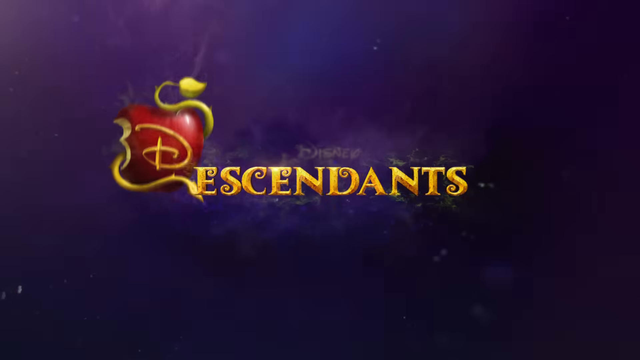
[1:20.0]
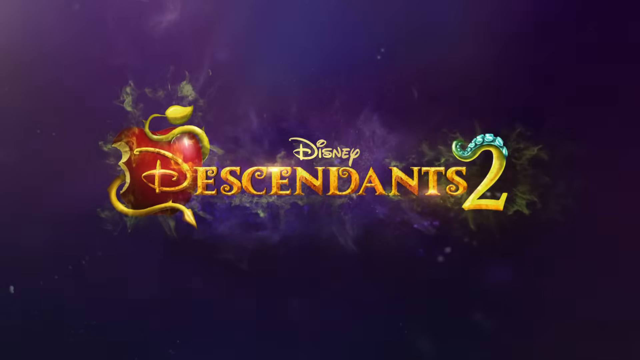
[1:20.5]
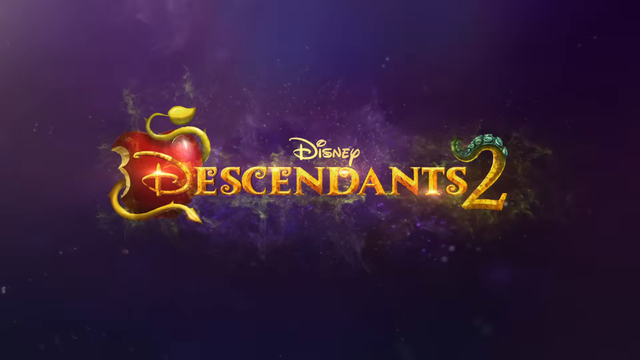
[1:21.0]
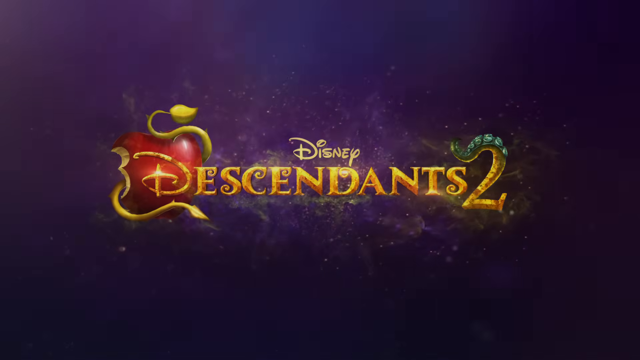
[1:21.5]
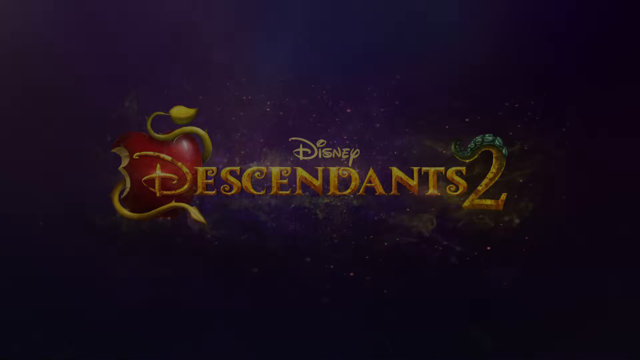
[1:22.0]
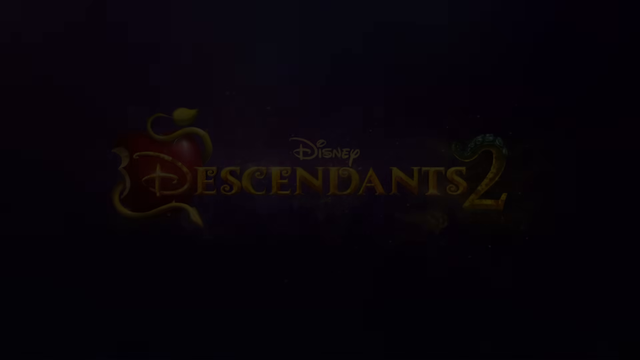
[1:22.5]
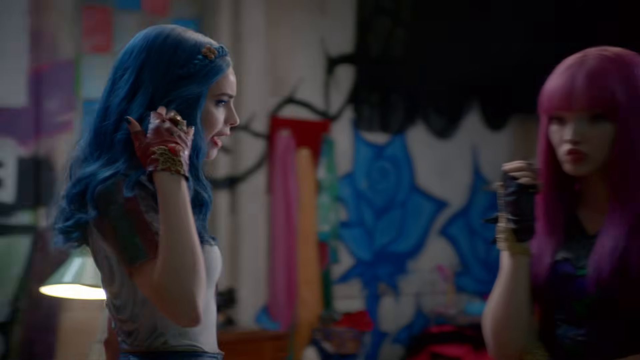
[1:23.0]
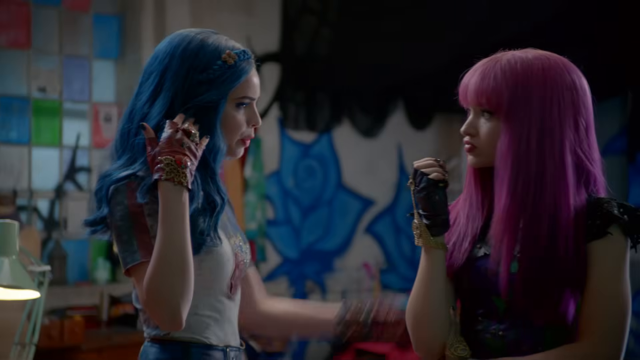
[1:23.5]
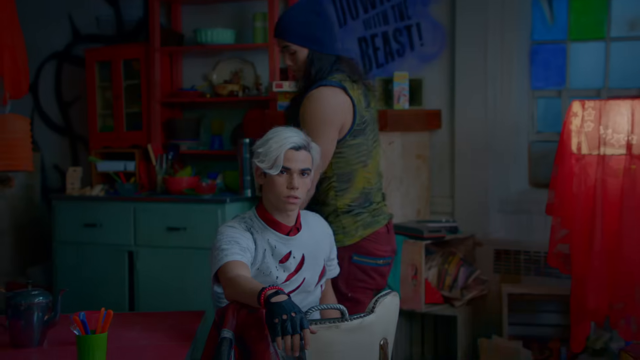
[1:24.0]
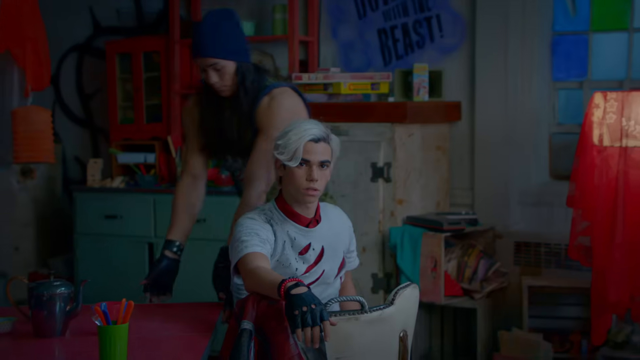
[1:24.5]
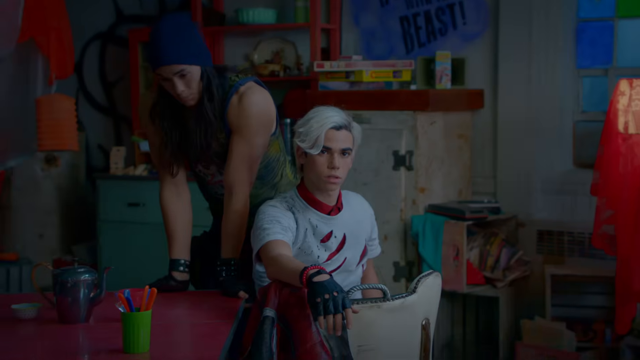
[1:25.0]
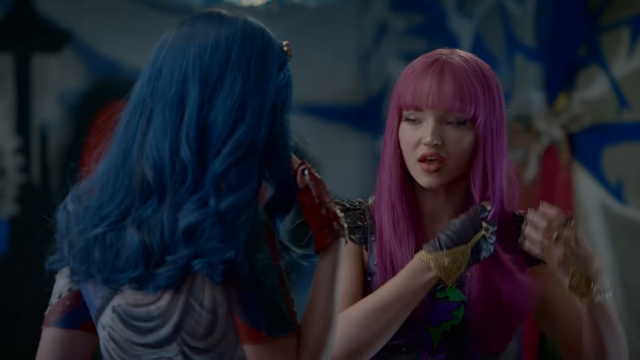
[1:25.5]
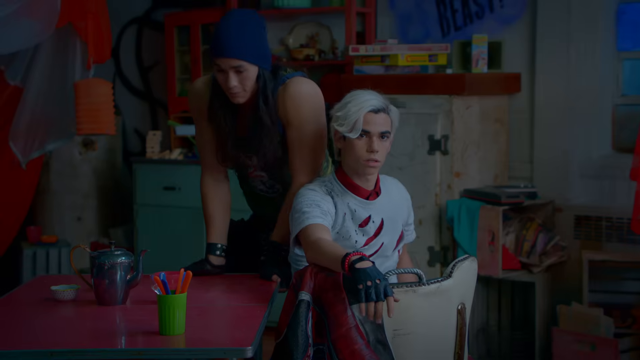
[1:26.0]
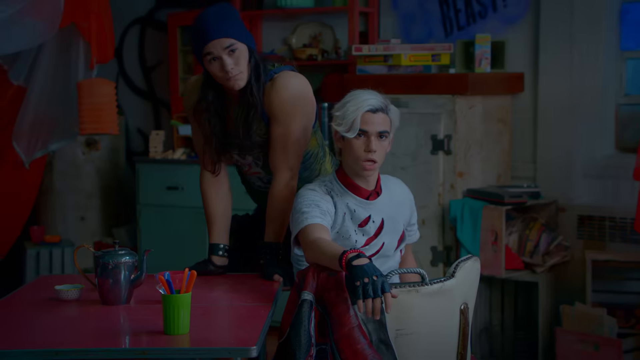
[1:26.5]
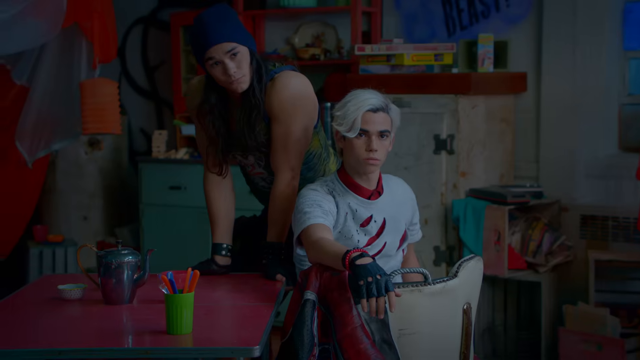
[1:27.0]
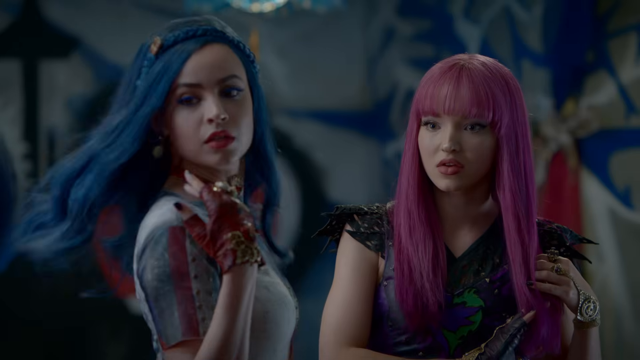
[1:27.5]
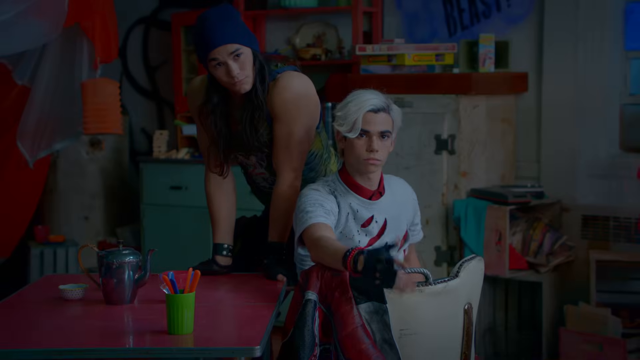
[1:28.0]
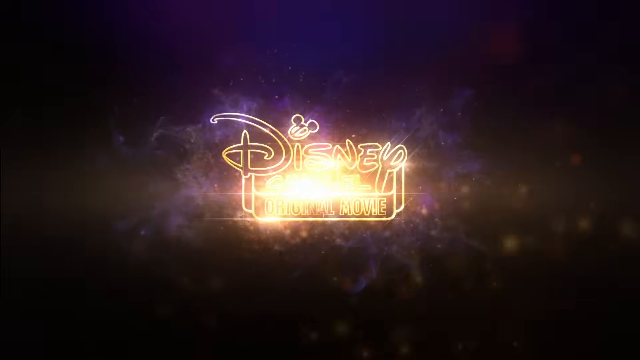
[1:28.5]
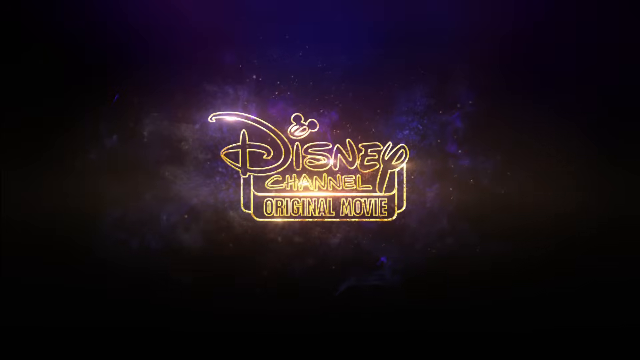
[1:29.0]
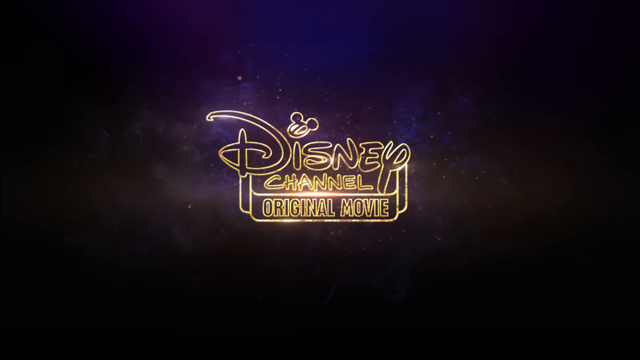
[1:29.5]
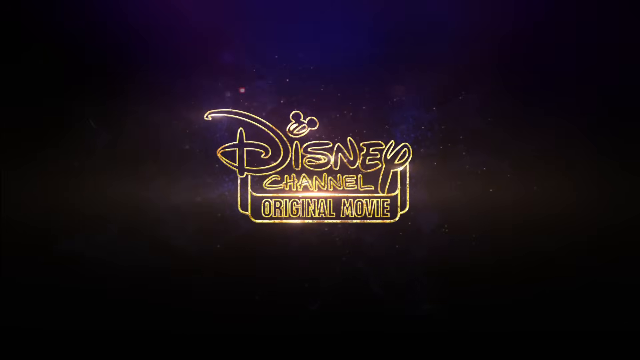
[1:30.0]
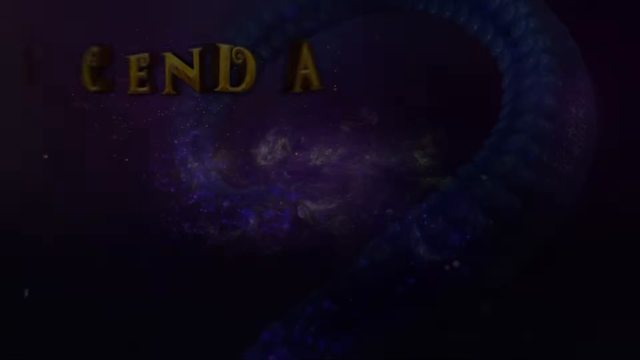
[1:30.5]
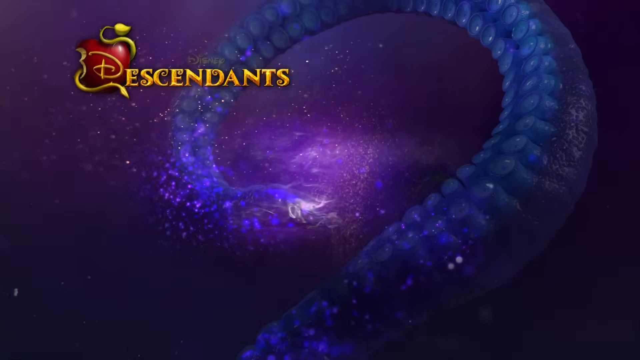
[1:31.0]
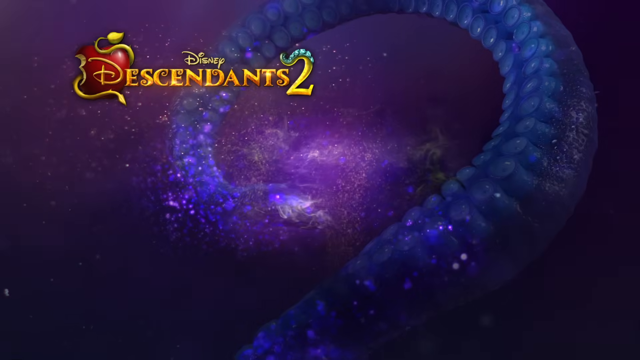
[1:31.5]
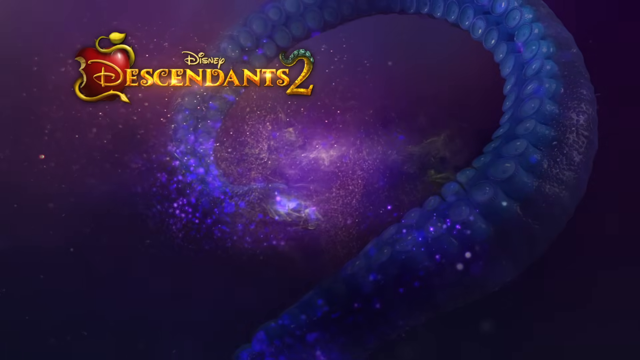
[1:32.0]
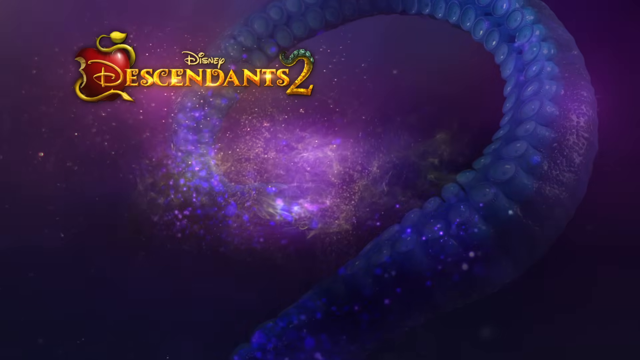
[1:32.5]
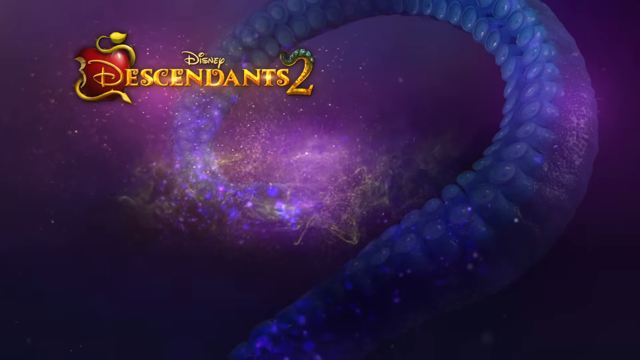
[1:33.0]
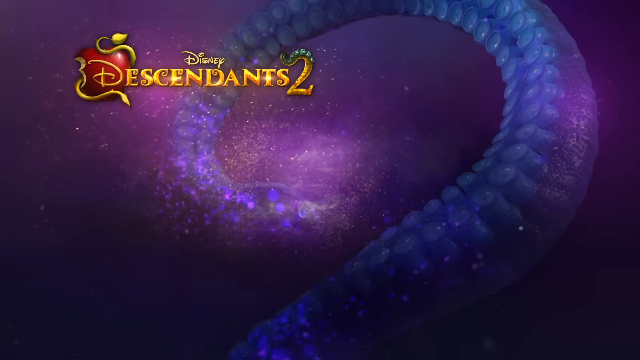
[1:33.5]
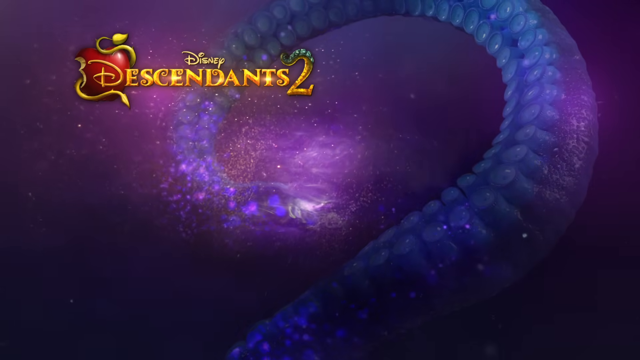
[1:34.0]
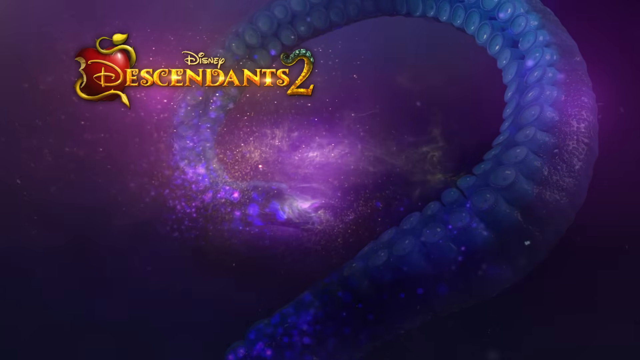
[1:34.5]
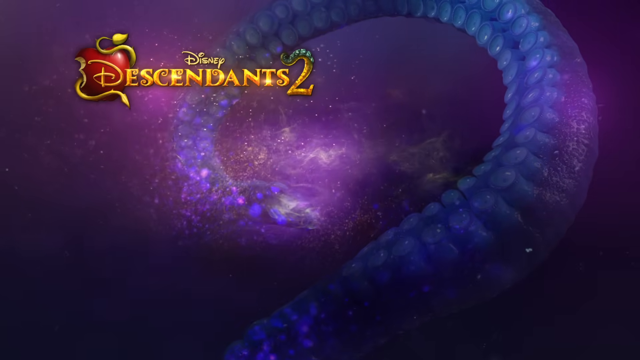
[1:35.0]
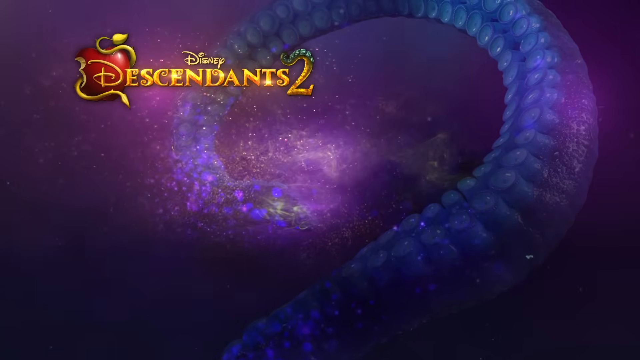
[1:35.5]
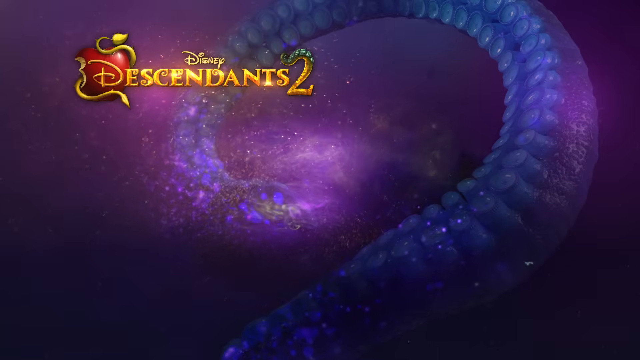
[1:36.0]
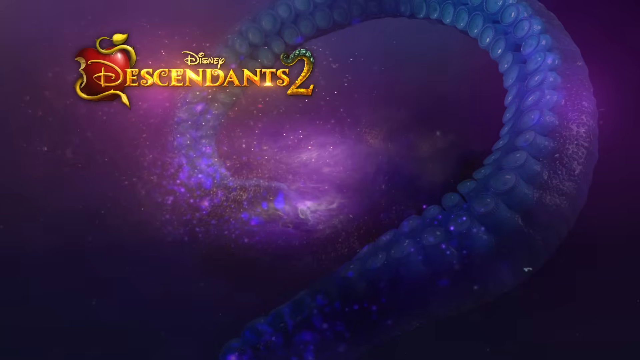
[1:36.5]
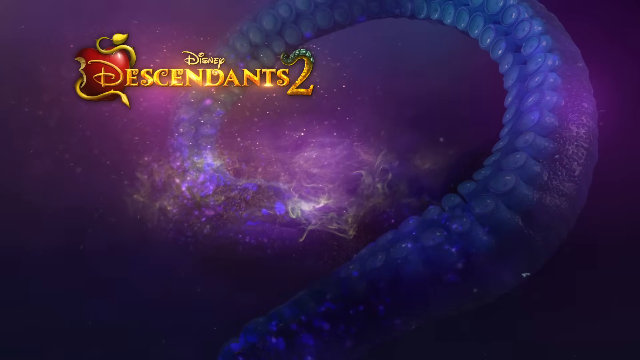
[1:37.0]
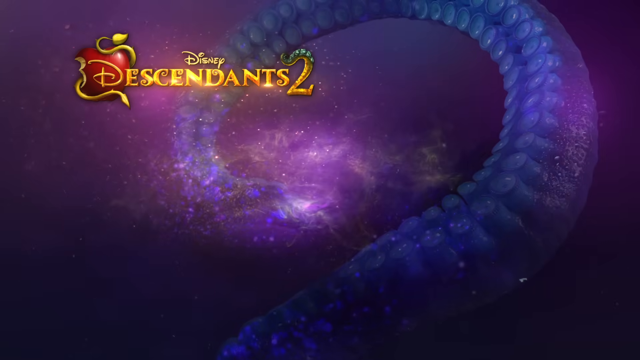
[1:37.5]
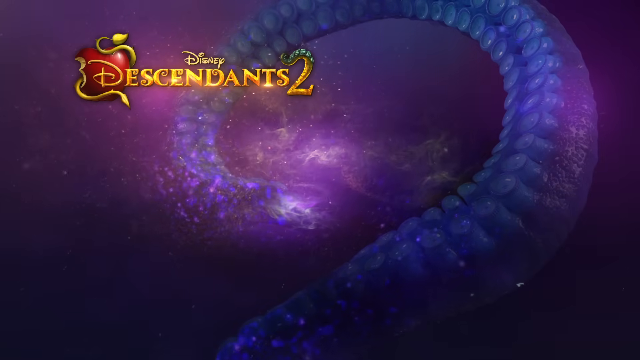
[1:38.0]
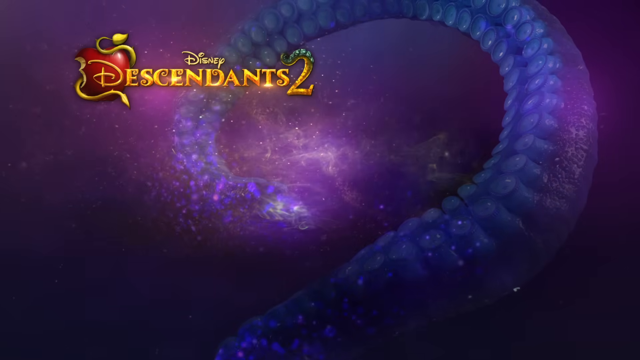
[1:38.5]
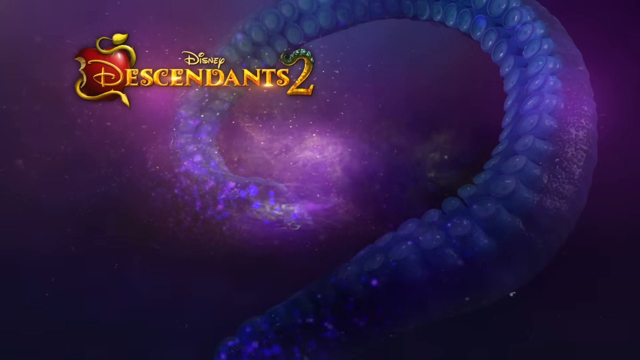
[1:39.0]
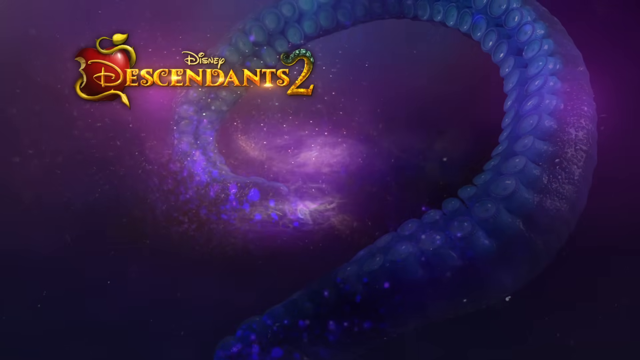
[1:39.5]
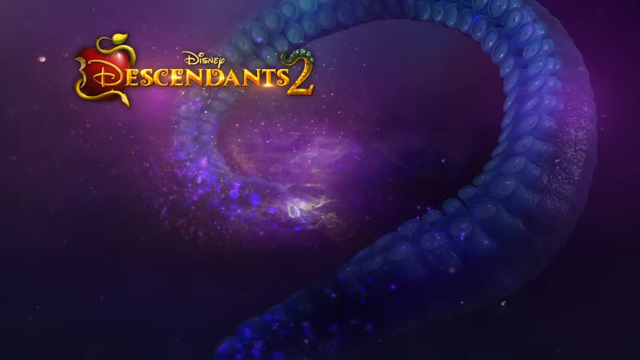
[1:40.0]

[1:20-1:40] The title "Descendants" appears, with the D sitting on top of an apple, and the text reads "Descendants, Disney's Descendants 2." Mal and Evie are speaking, and someone is brushing her hair. Then the text "Disney's Channel original movie Descendants 2" appears on a purple, blue, iridescent, almost gold screen that kind of almost looks like outer space.